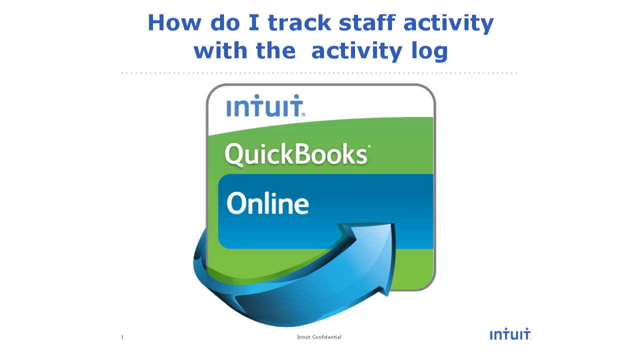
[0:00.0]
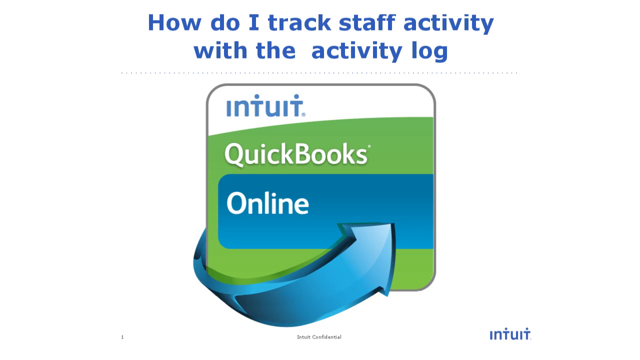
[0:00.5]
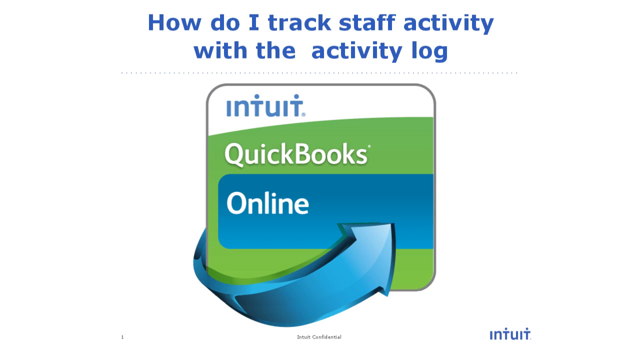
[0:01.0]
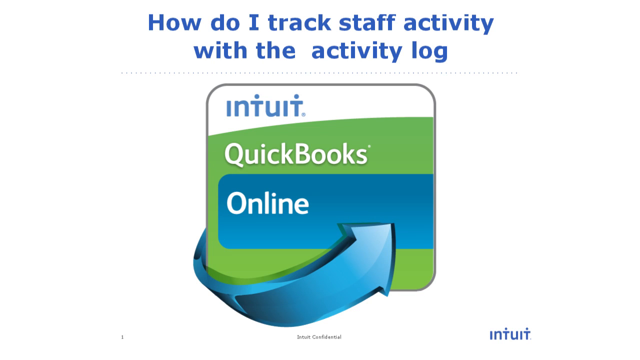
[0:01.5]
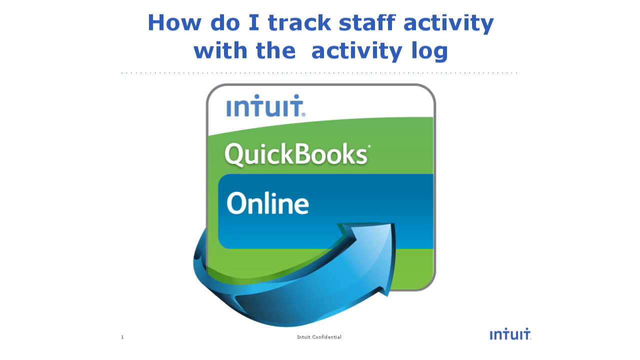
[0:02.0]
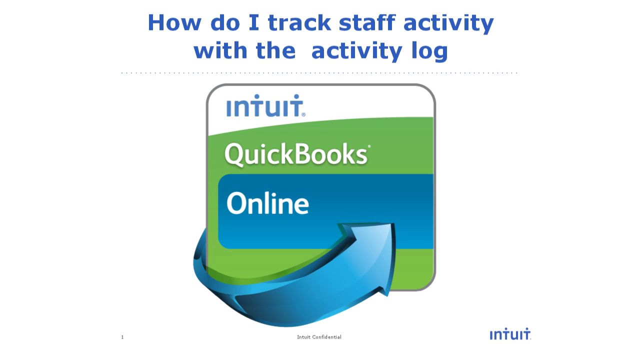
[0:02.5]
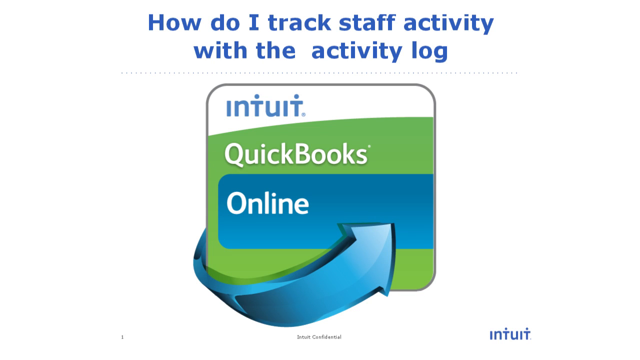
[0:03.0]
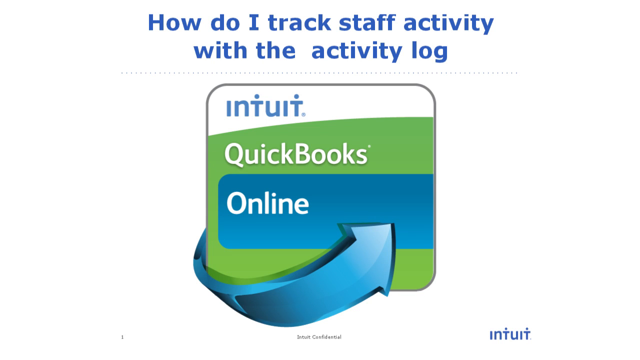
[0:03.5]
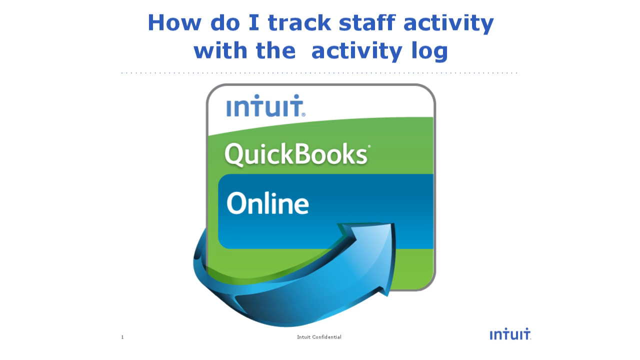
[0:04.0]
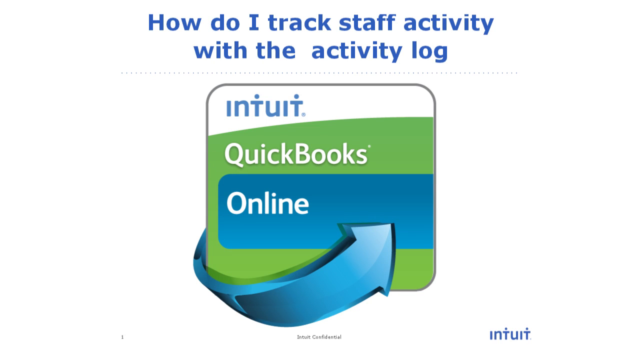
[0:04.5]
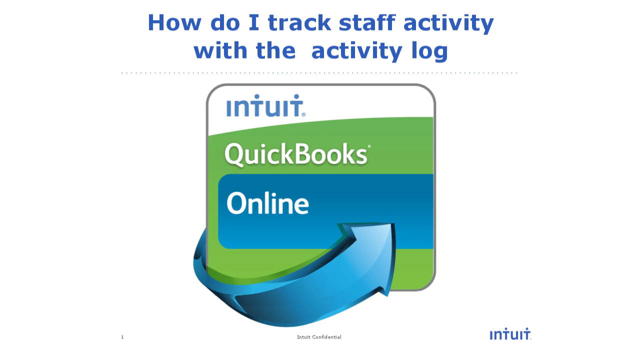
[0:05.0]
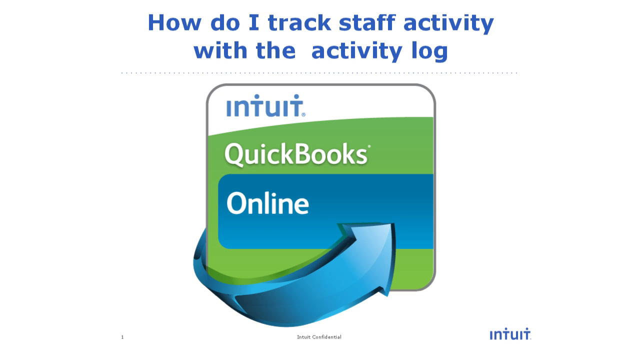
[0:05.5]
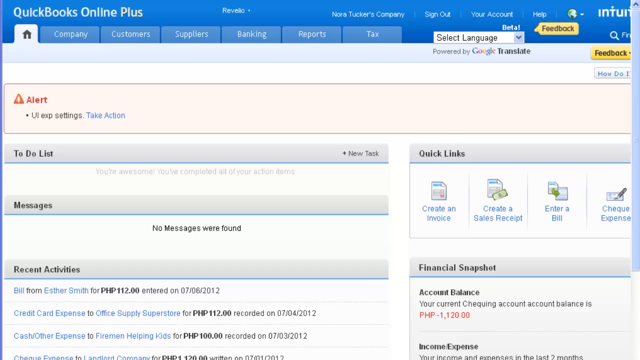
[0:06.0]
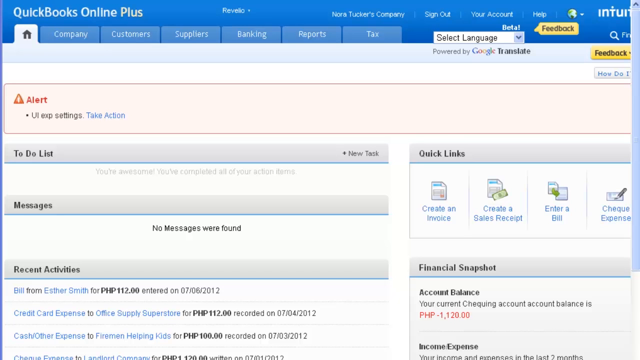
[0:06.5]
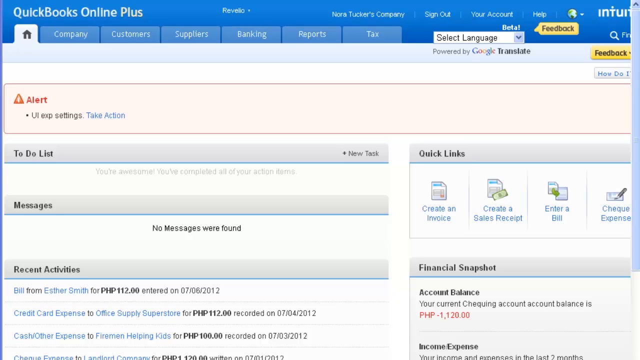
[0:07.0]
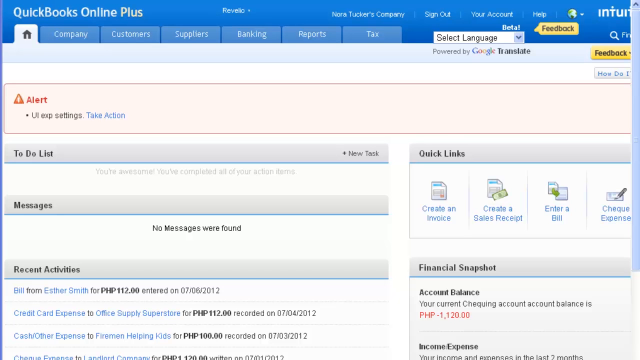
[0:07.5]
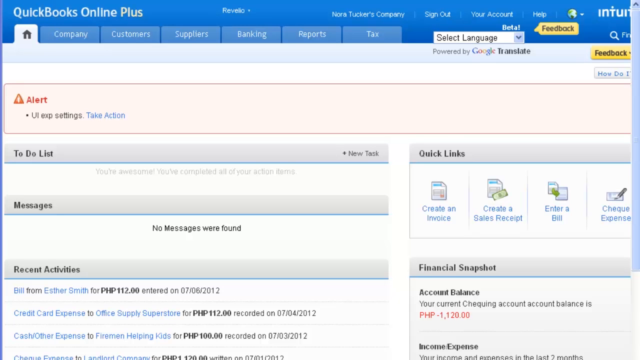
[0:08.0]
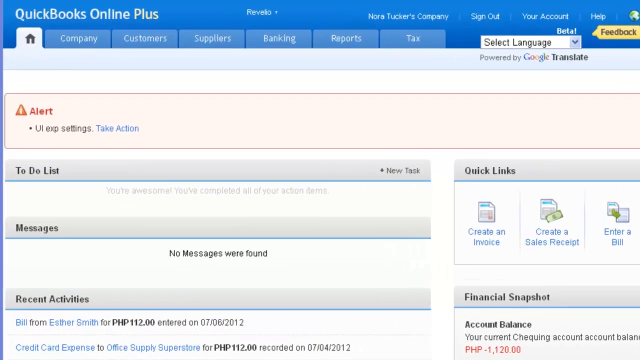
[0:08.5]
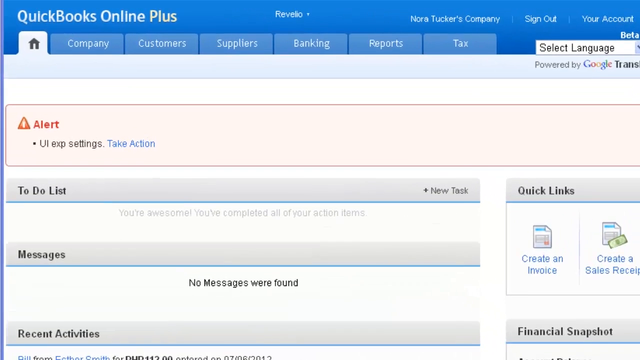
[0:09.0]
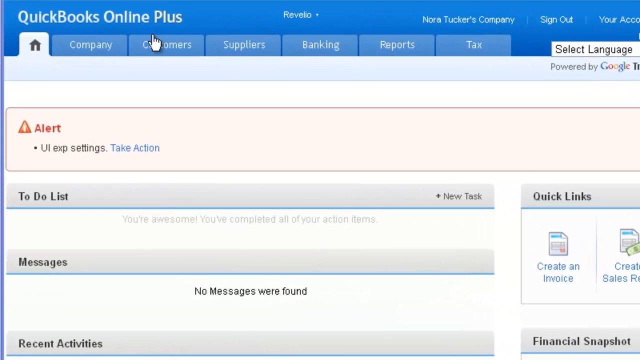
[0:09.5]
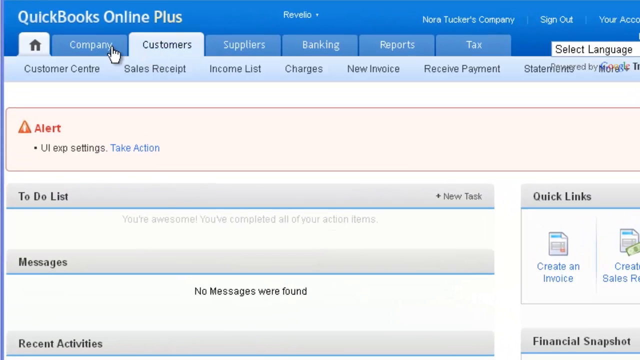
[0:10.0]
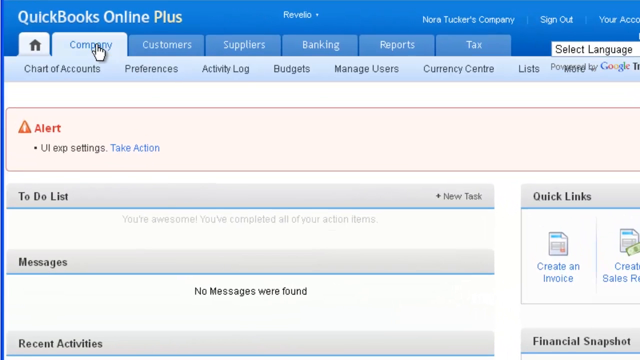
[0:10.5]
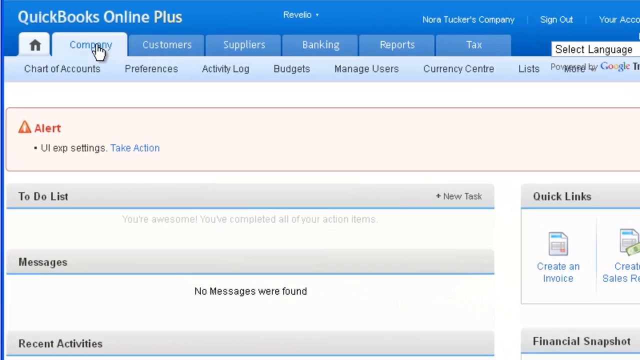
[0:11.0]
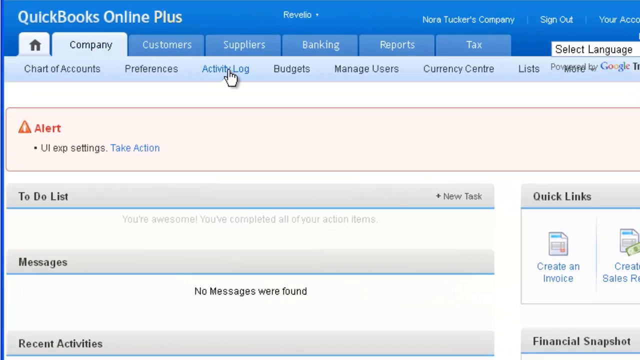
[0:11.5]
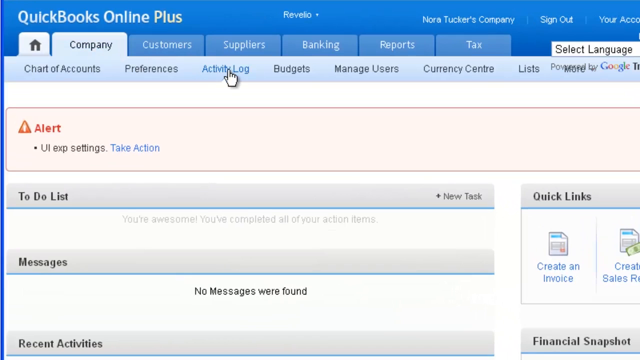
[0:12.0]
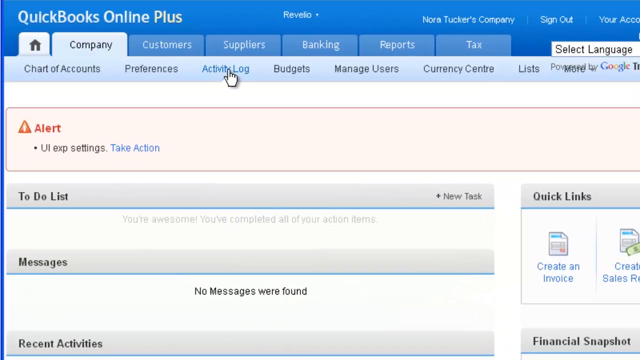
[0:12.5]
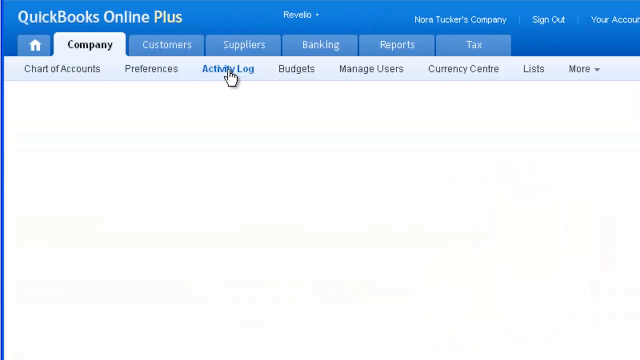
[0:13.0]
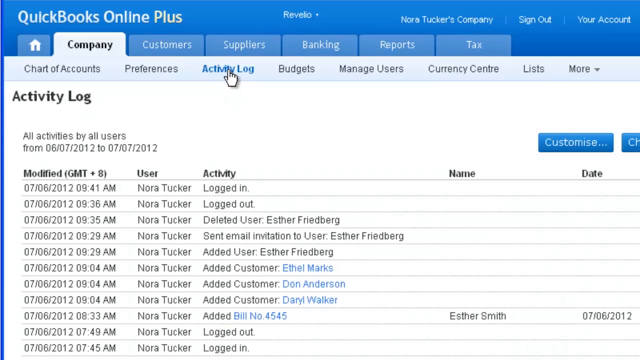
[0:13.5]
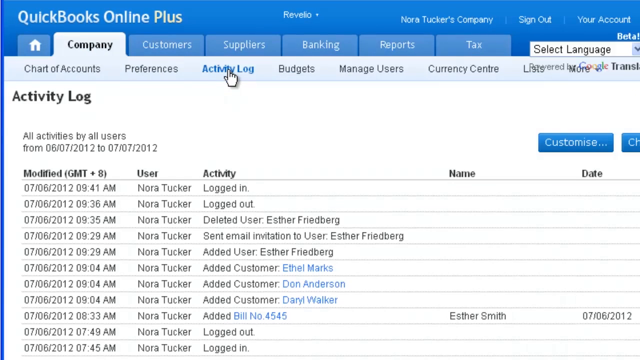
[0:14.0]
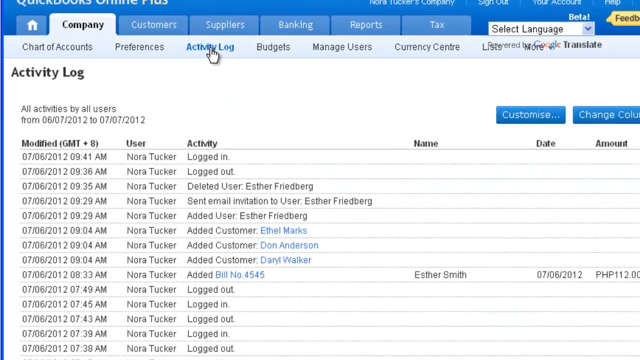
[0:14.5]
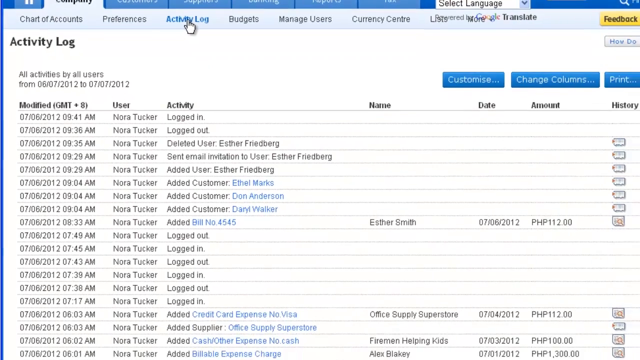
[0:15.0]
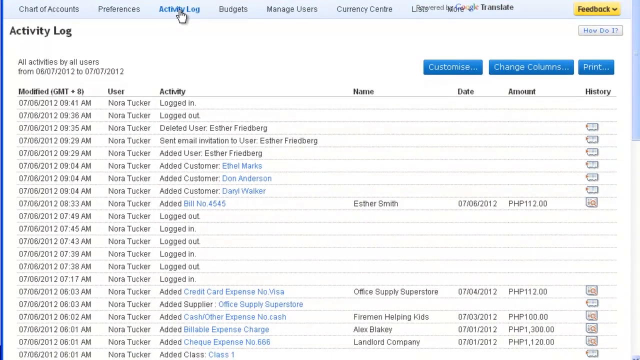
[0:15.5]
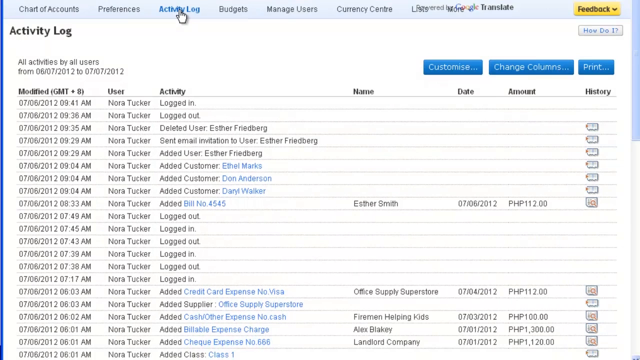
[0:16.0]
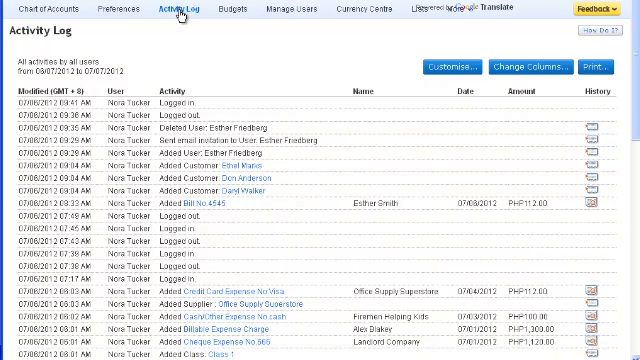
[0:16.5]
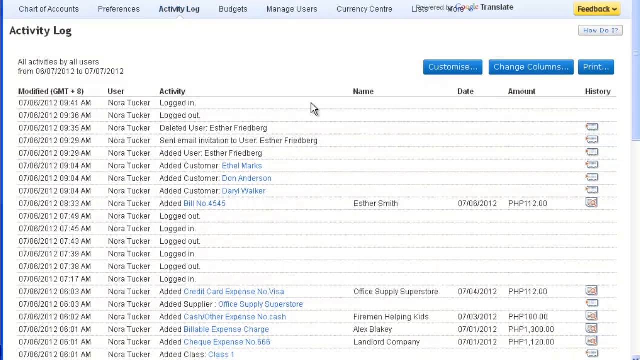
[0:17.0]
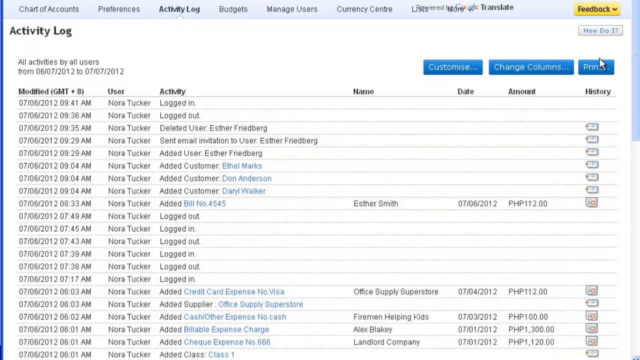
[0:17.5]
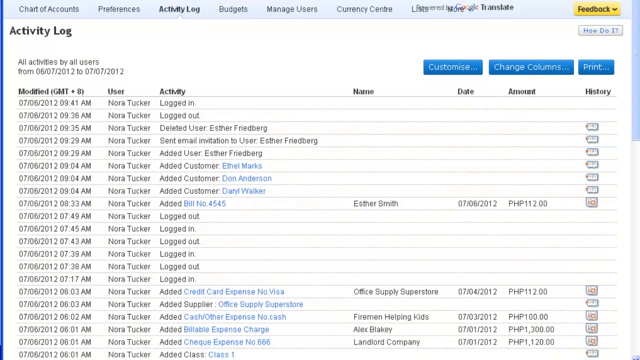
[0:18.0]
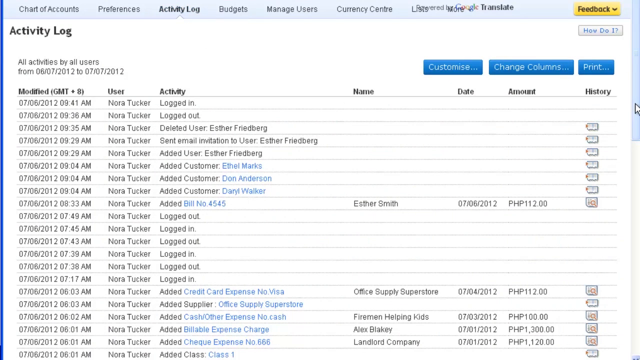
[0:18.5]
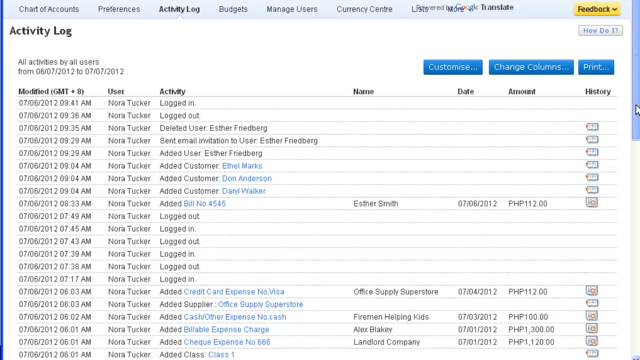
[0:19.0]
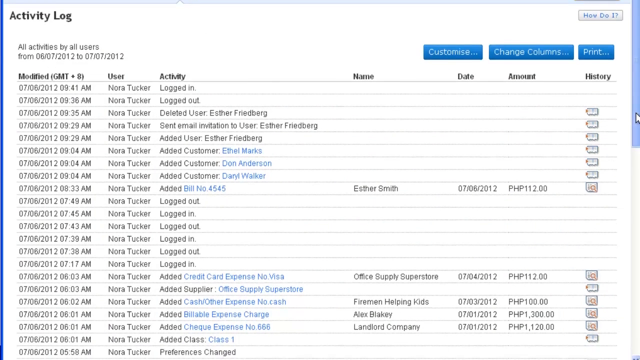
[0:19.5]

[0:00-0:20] On-screen text reads "how do I track staff activity with their activity logs" along with "Intuit QuickBooks Online". The view then zooms up to a screen that says "QuickBooks Online Plus". A tab labeled "company" is clicked, followed by a tab labeled "activity logs". The view zooms out and the mouse scrolls down the page. It looks like something for a business, seemingly about tracking people's work.